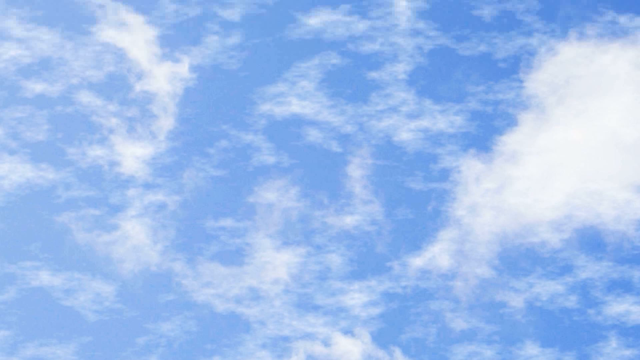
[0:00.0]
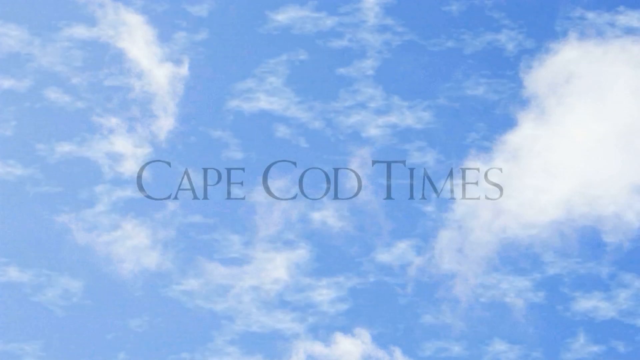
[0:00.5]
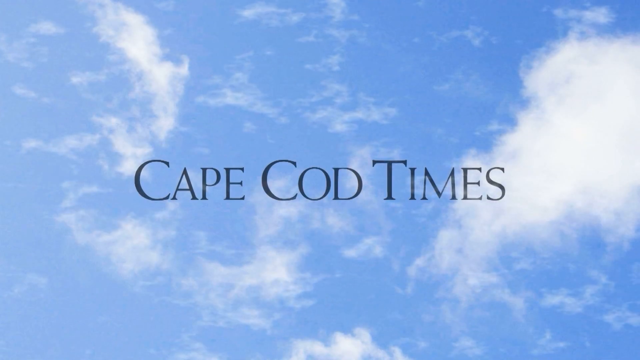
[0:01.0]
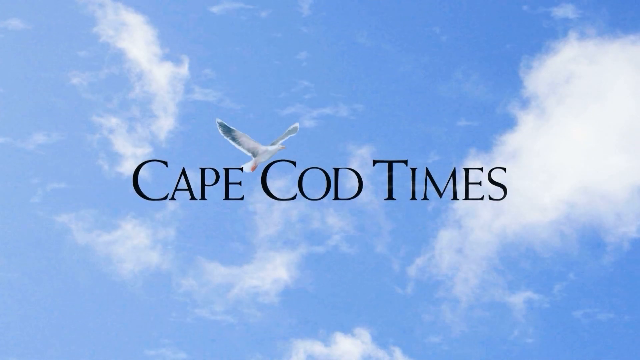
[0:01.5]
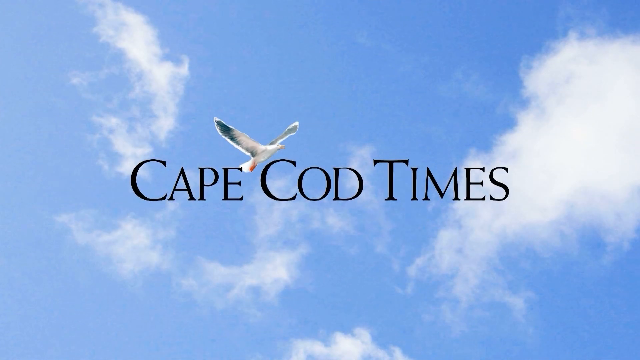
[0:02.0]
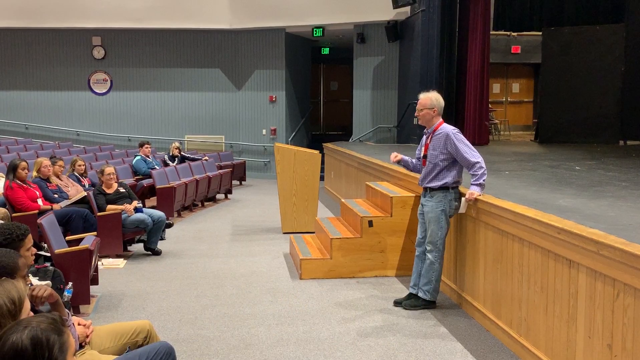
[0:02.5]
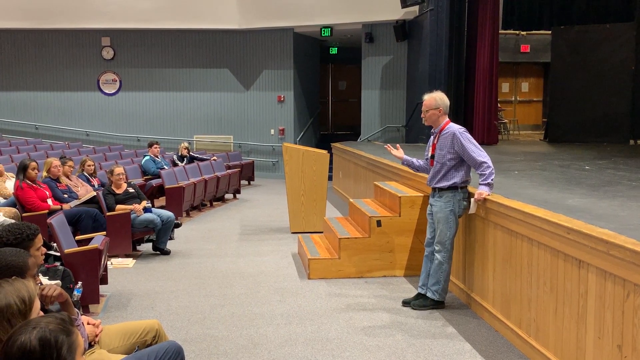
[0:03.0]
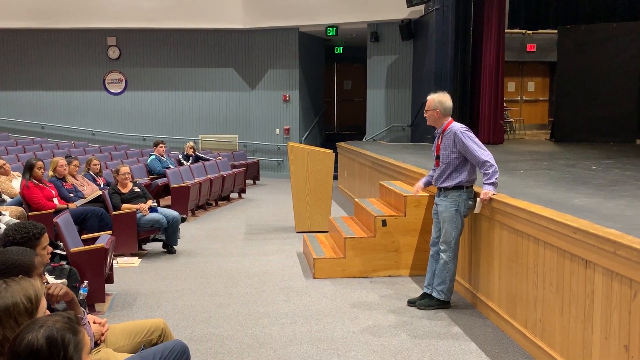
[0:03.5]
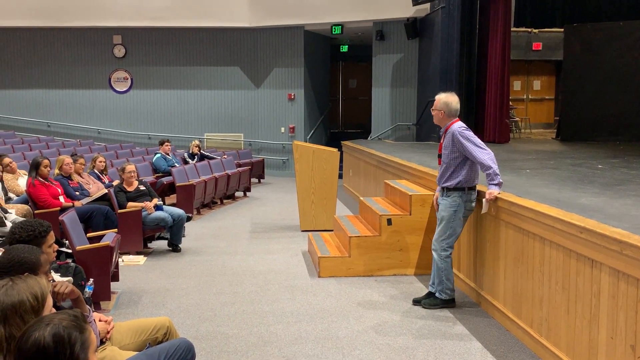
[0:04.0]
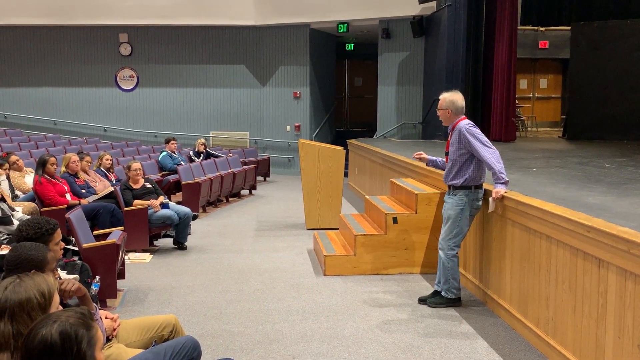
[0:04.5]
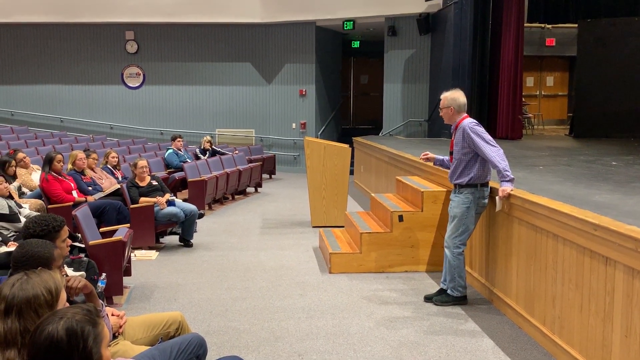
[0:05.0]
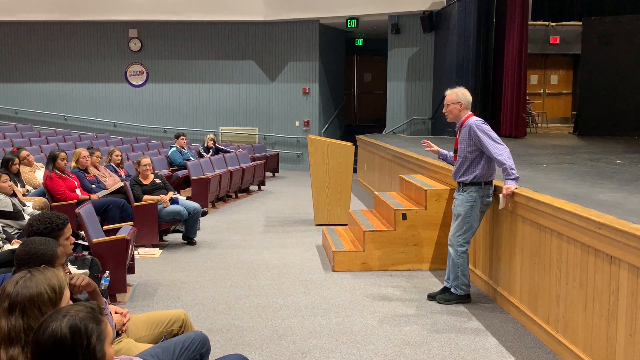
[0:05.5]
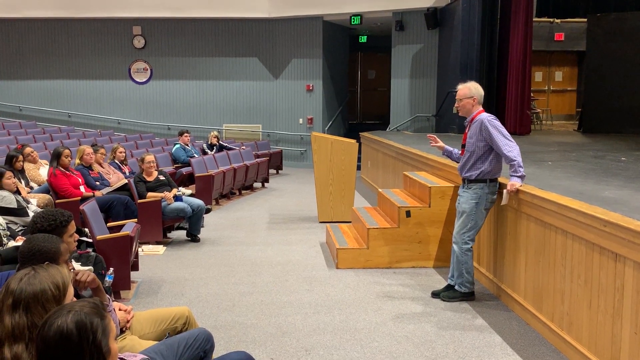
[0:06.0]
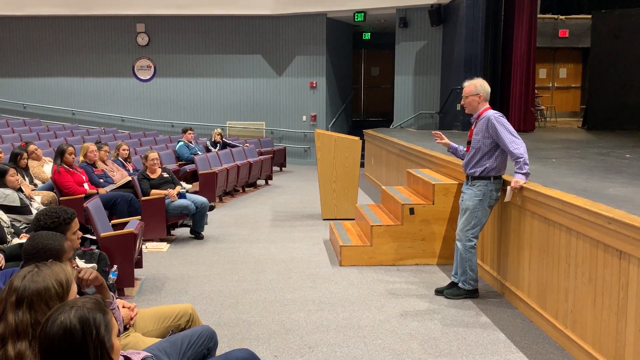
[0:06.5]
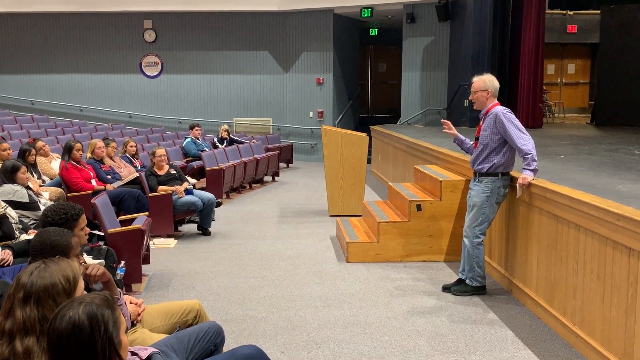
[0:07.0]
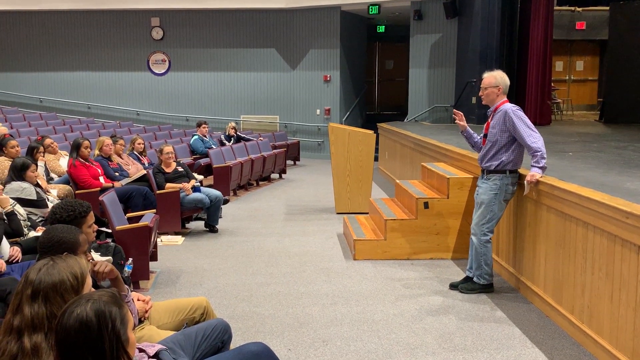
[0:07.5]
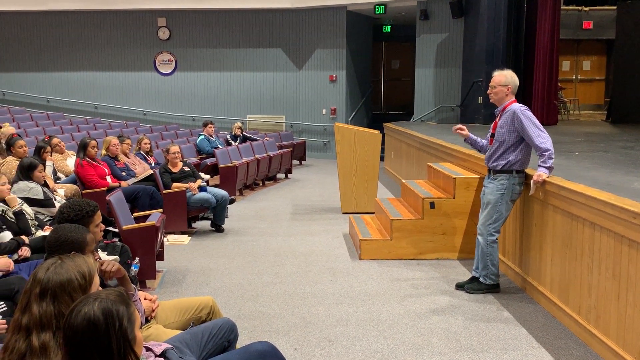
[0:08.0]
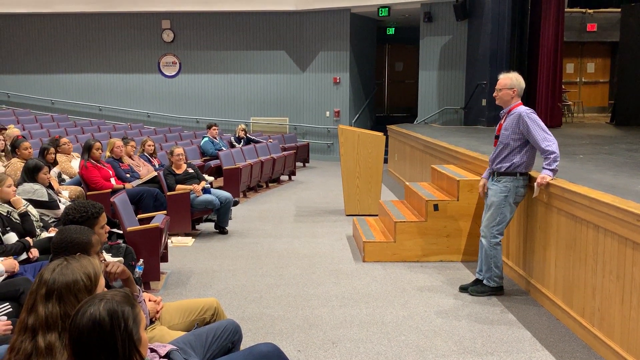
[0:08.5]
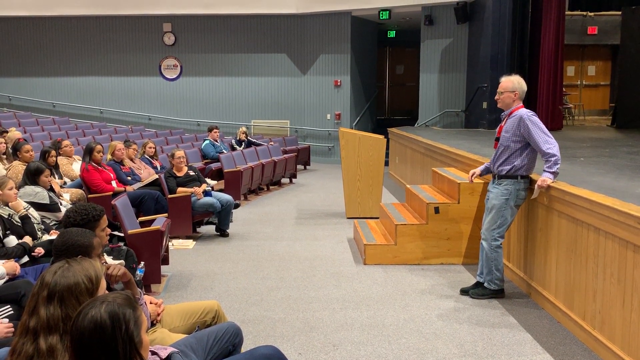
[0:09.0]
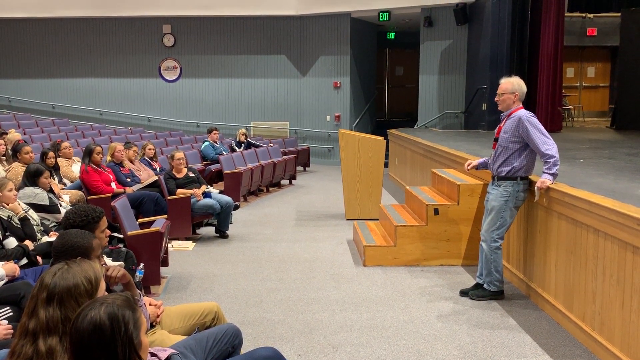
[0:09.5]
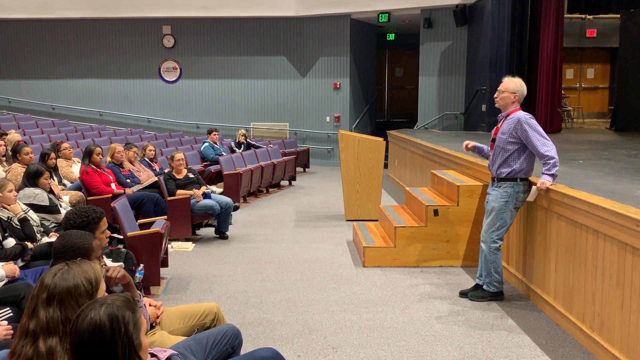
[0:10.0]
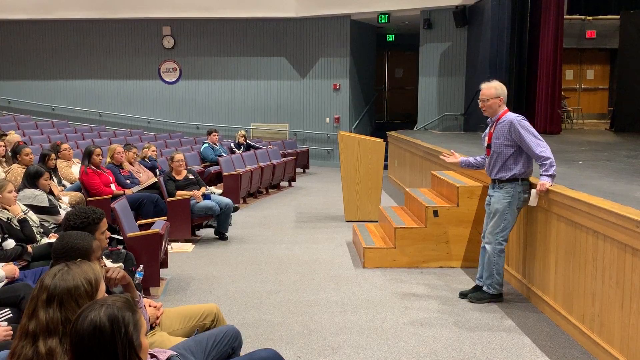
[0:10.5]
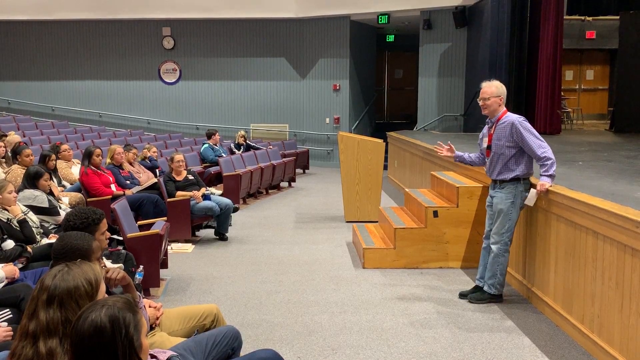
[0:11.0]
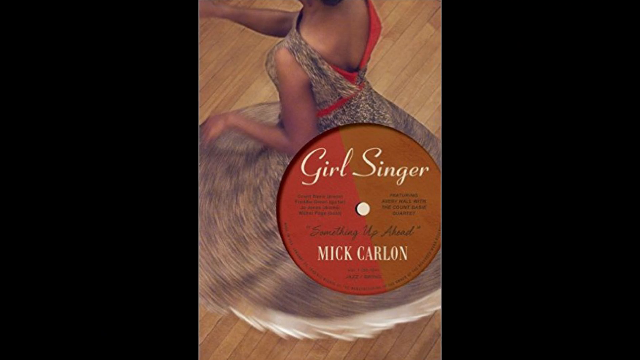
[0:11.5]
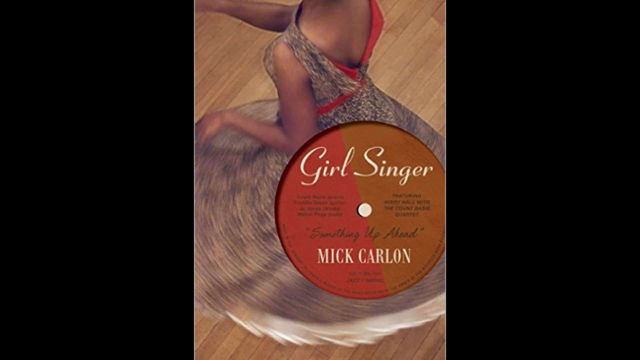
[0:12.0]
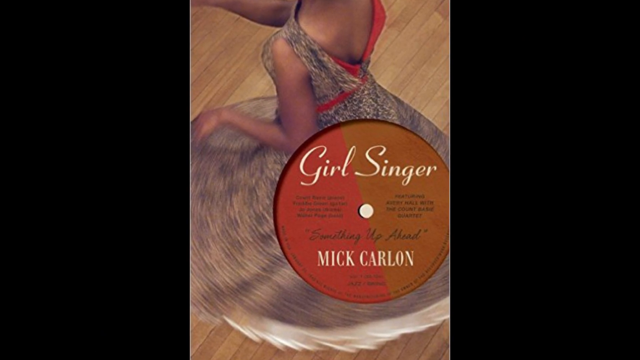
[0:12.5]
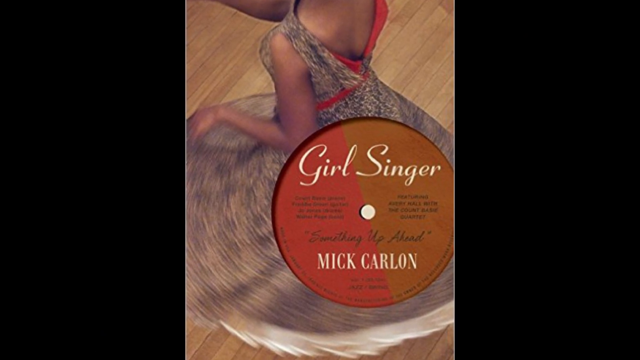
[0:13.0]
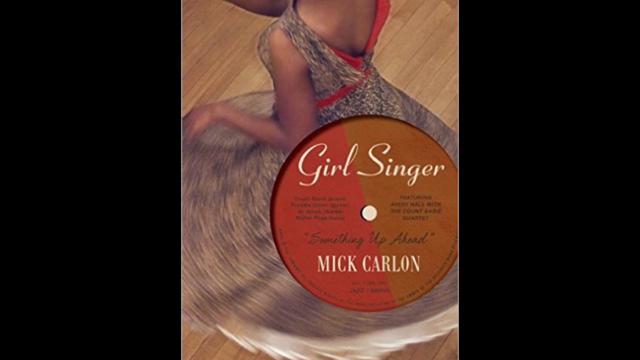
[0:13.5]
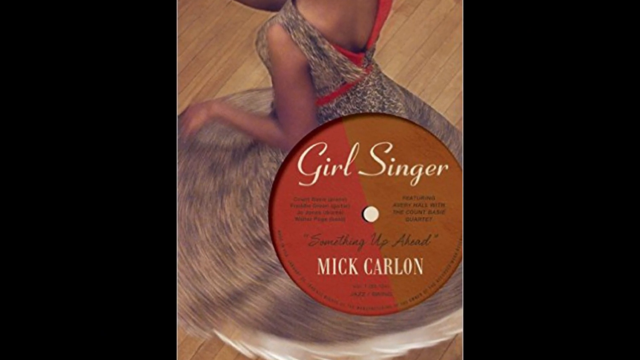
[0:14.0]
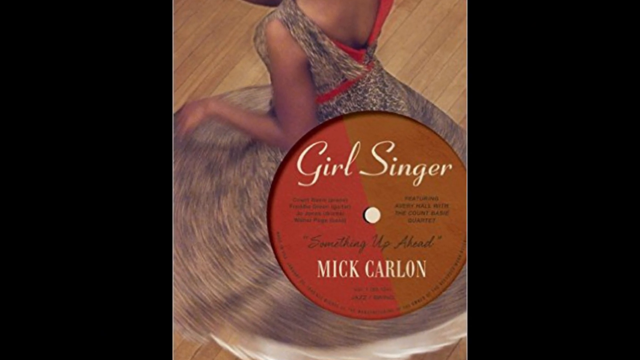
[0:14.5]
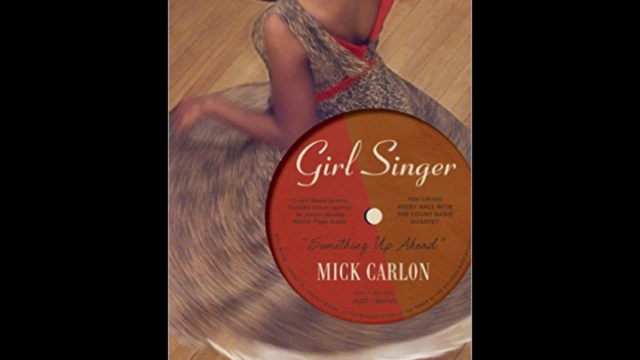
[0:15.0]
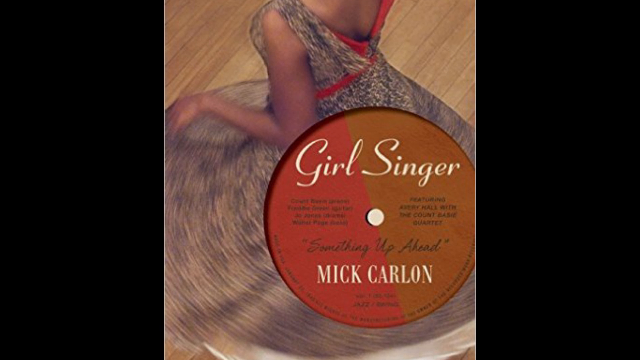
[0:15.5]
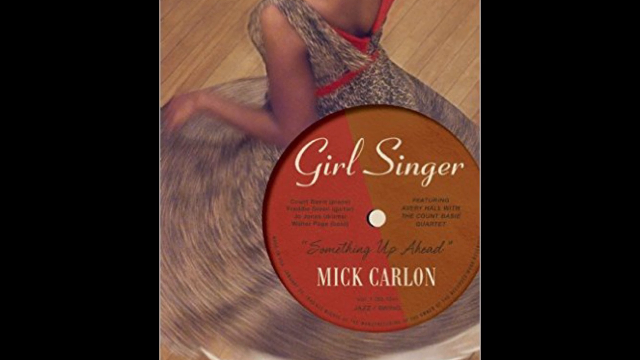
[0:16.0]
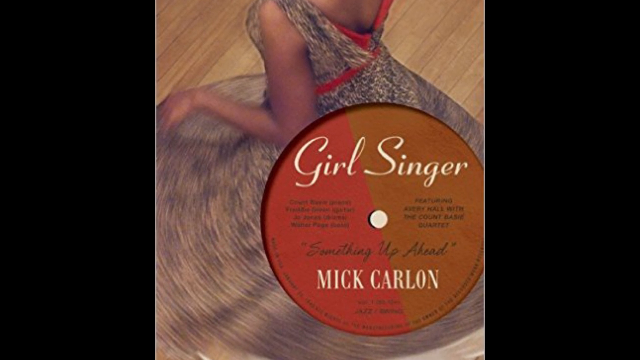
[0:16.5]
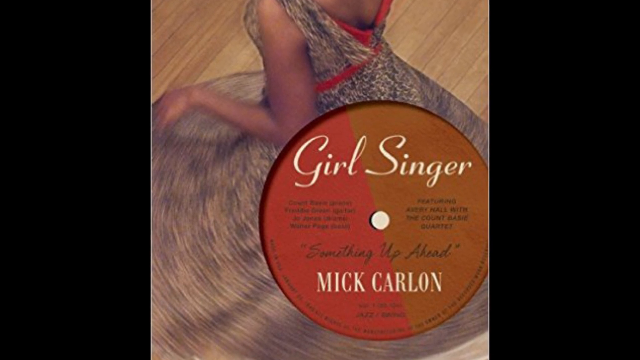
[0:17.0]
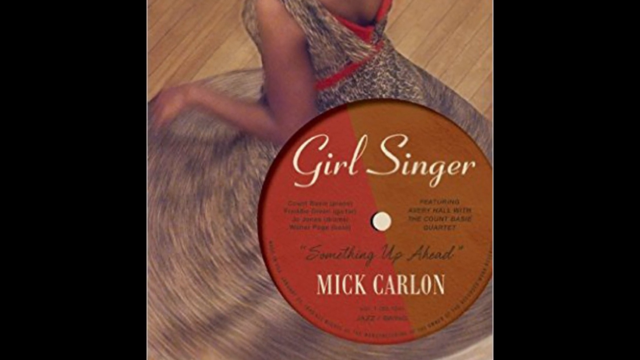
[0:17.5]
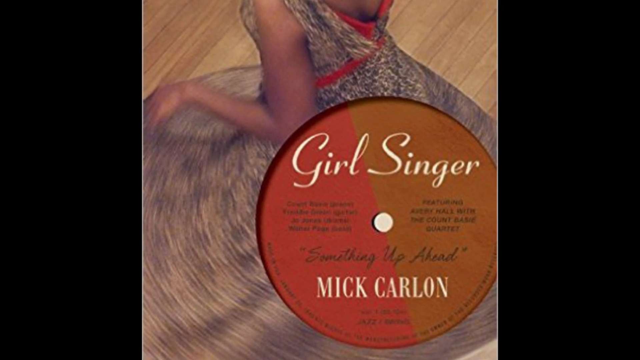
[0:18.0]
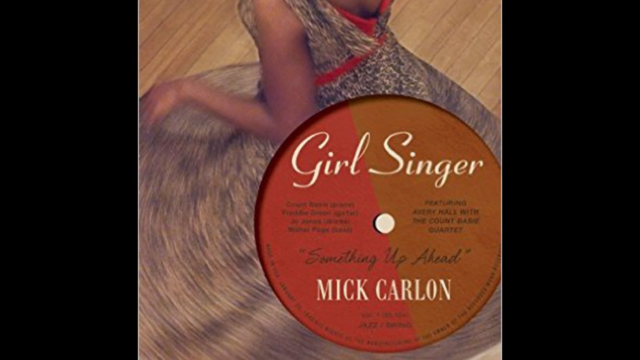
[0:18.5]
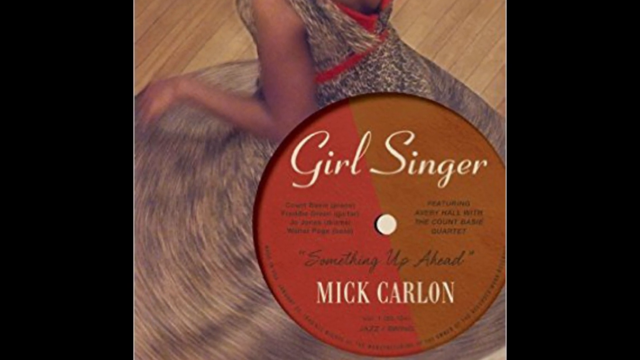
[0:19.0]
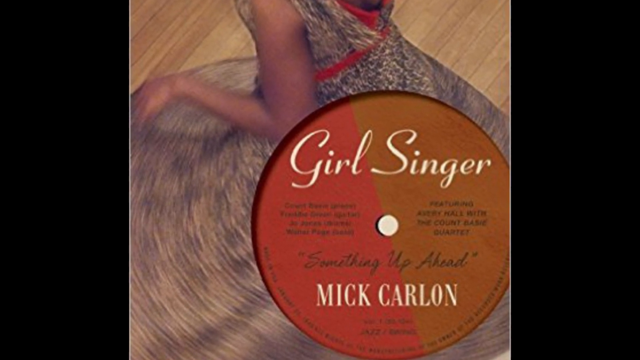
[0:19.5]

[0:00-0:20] A Cape Cod Times news video opens on a very blue sky with fluffy clouds that move a little, and then a seagull appears between the E and the C, apparently superimposed. Suddenly a man is talking, seemingly in a lecture hall or auditorium, maybe at a college. He stands leaning against the stage, wearing jeans, a button-down shirt of a kind of lilac color, and a red lanyard. He is an older man with very gray hair and glasses. On the left, a bunch of students, a mixture of boys and girls, sit in the seats. The camera pans more toward the students, and not a single one is on a cell phone. The video suddenly cuts to a picture of what seems to be an old album, with the round part showing the album's name. It says "girl singer Mick Carlin" and shows a picture of a black girl spinning in a dress, and the camera focuses in on it.